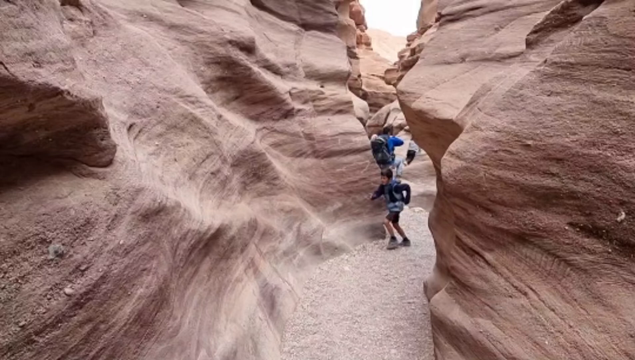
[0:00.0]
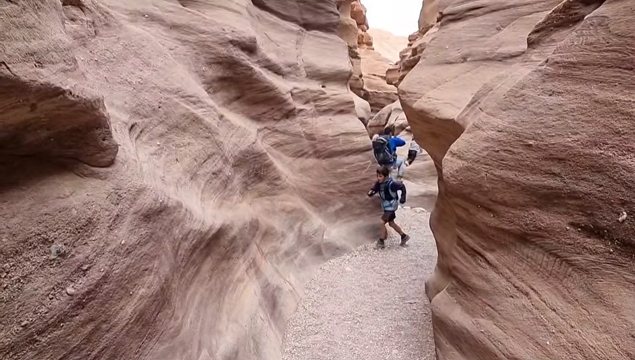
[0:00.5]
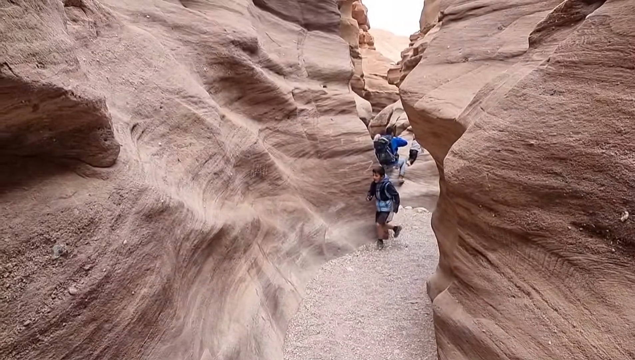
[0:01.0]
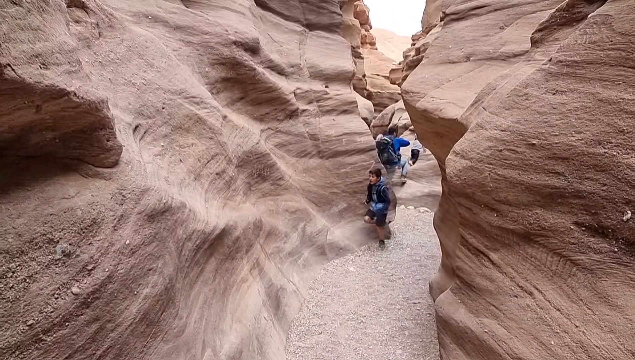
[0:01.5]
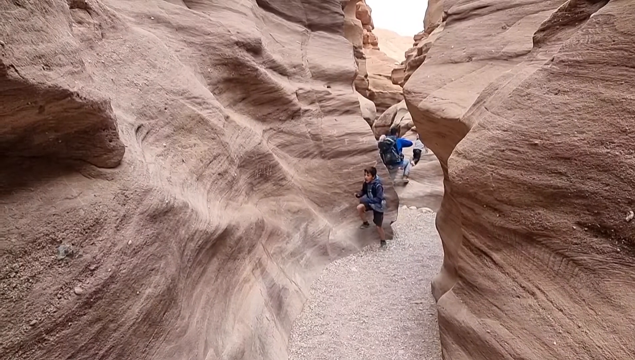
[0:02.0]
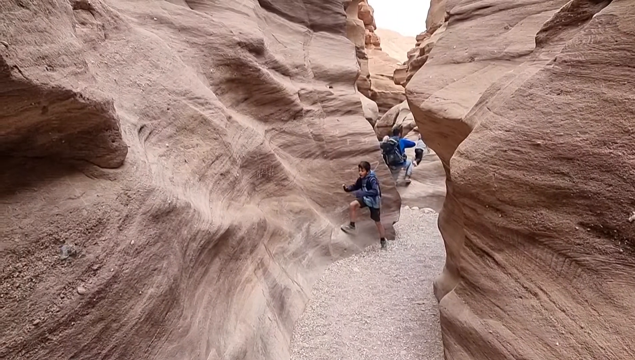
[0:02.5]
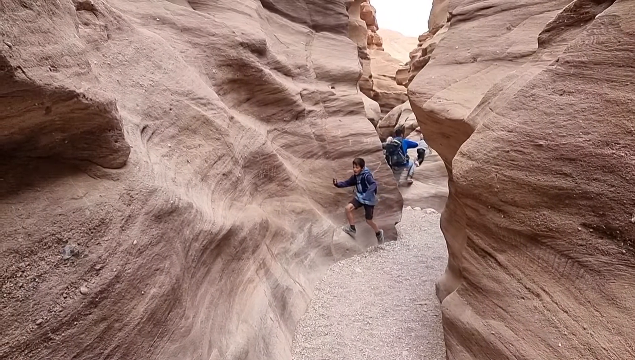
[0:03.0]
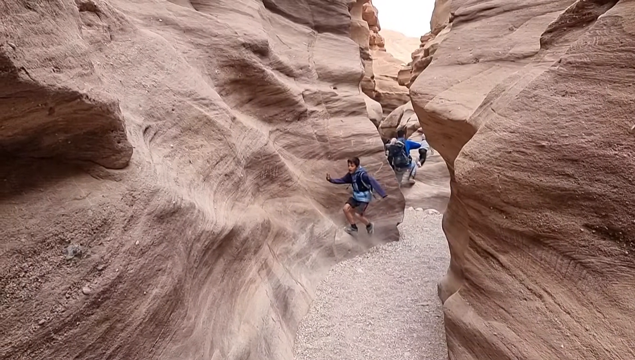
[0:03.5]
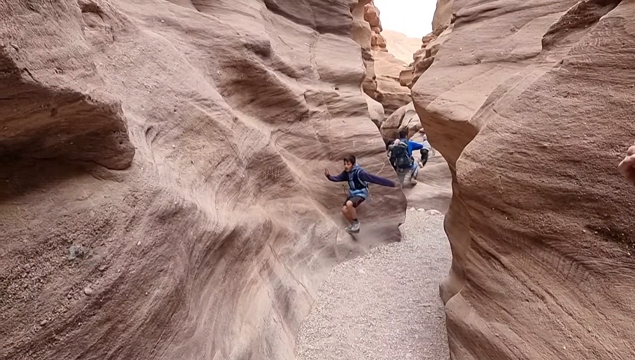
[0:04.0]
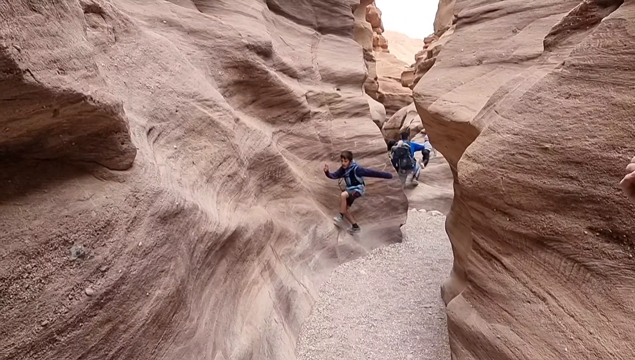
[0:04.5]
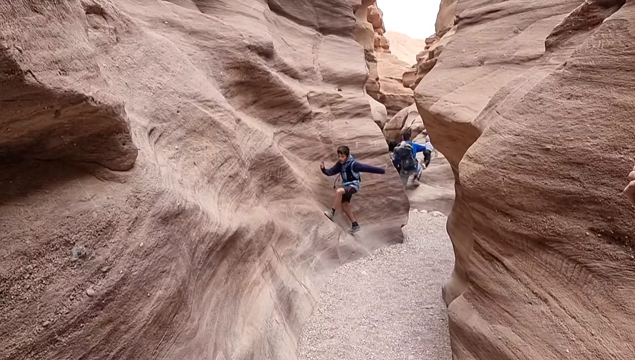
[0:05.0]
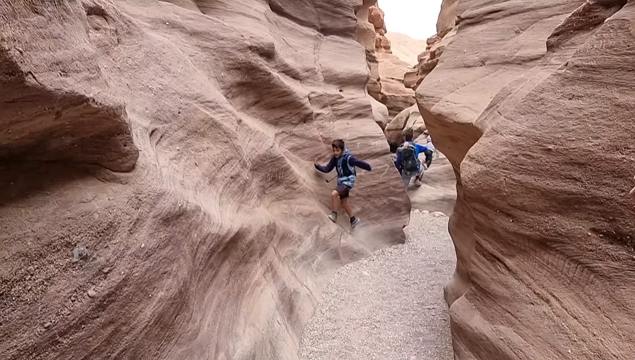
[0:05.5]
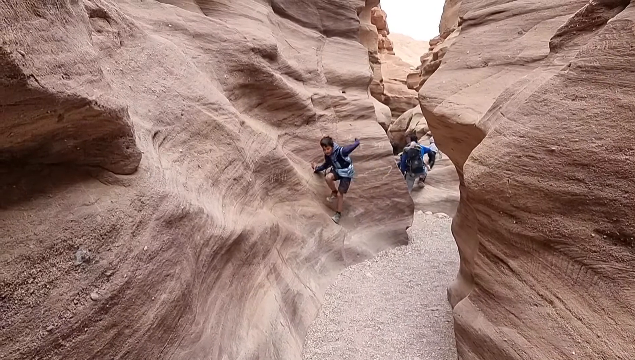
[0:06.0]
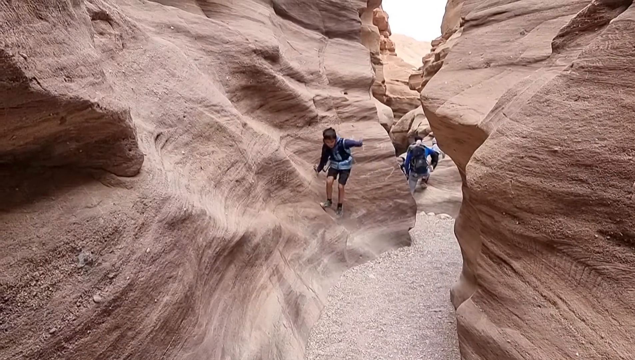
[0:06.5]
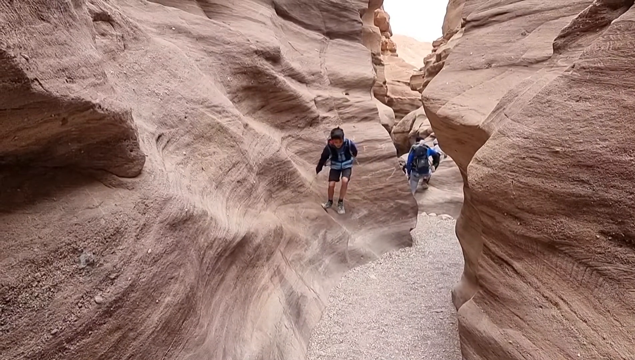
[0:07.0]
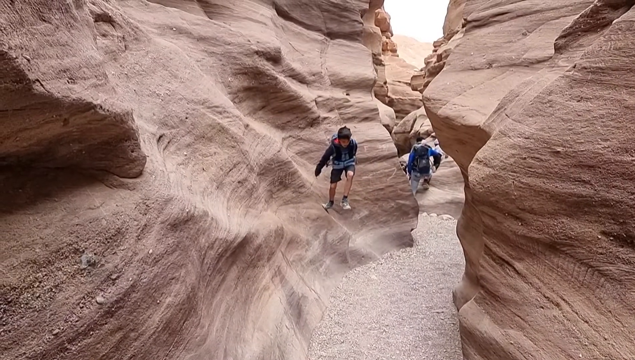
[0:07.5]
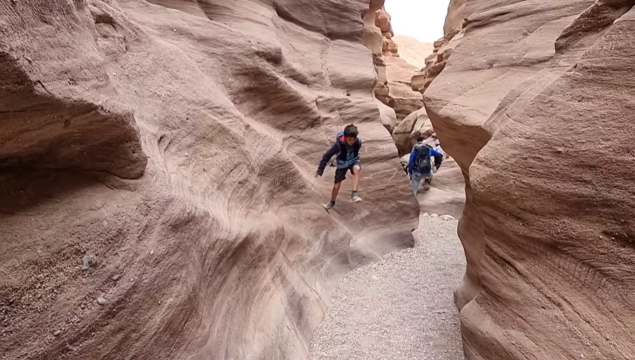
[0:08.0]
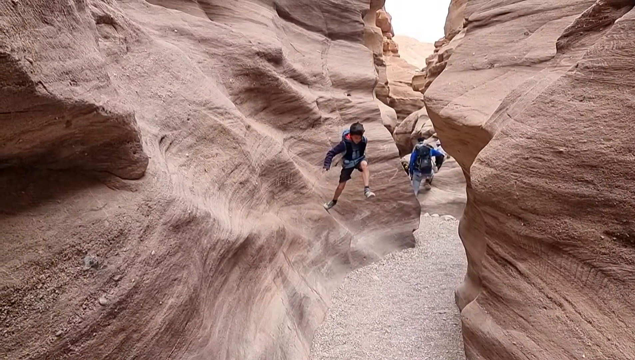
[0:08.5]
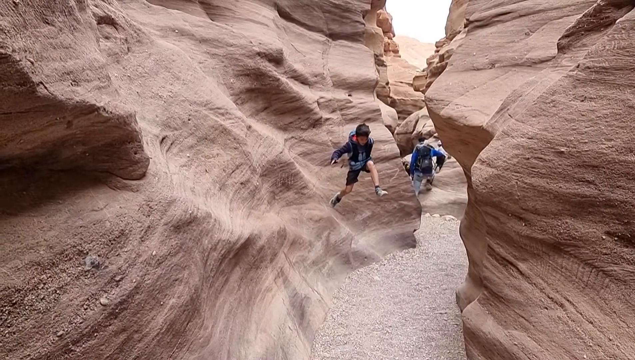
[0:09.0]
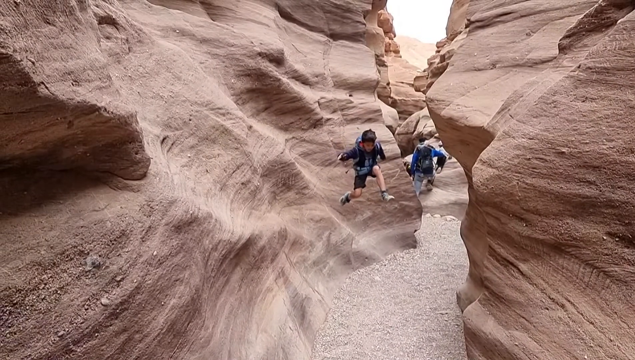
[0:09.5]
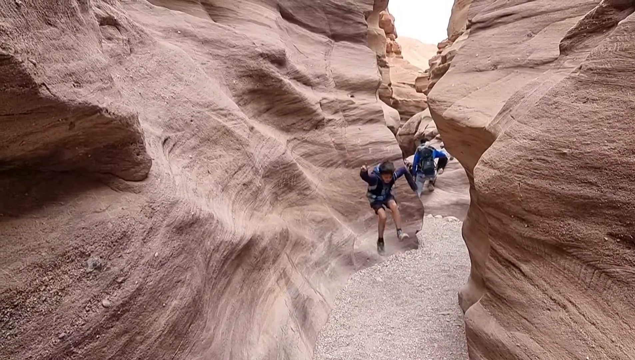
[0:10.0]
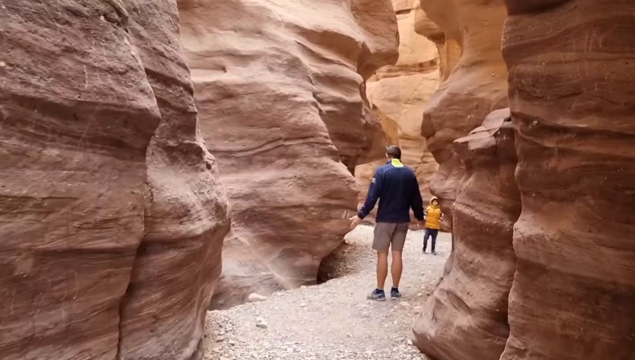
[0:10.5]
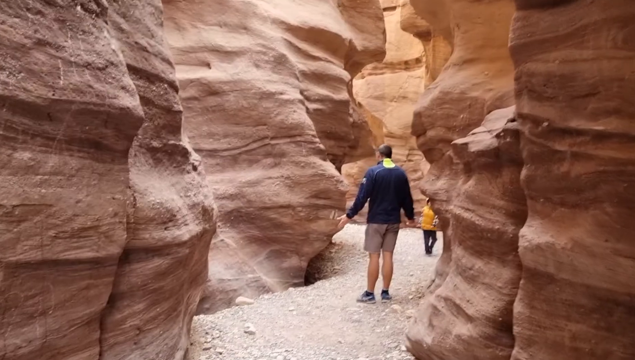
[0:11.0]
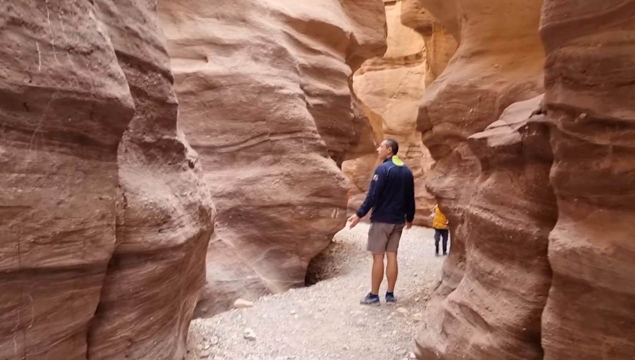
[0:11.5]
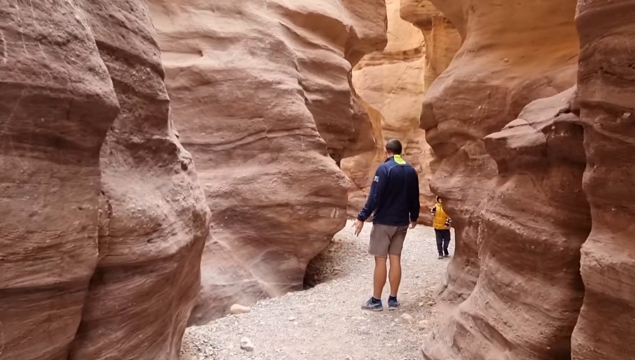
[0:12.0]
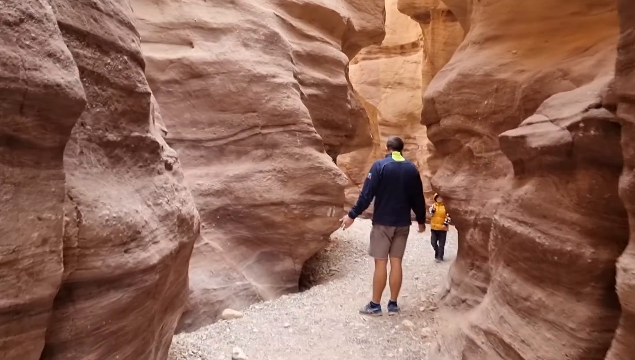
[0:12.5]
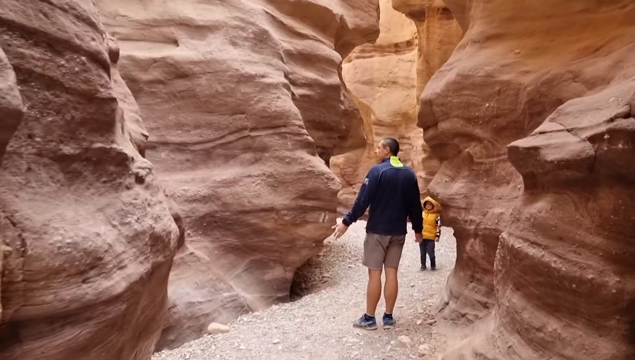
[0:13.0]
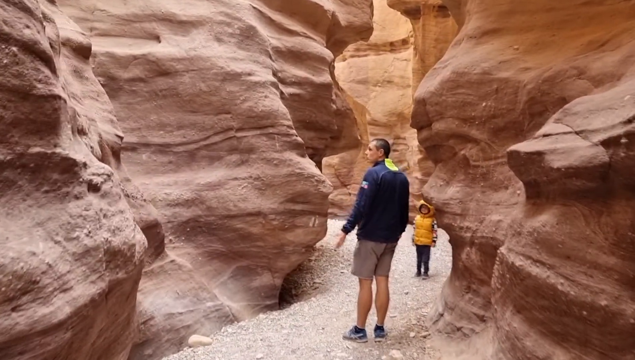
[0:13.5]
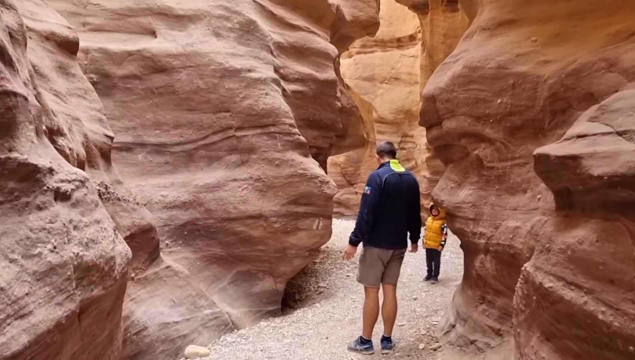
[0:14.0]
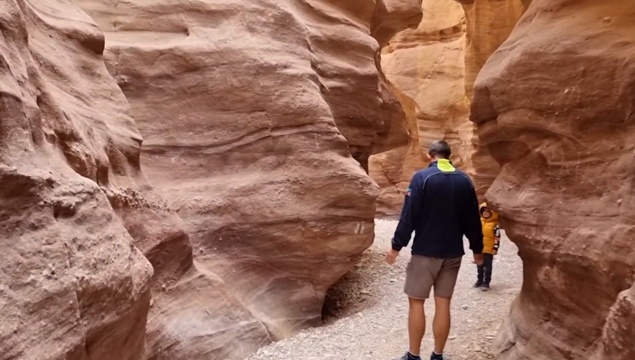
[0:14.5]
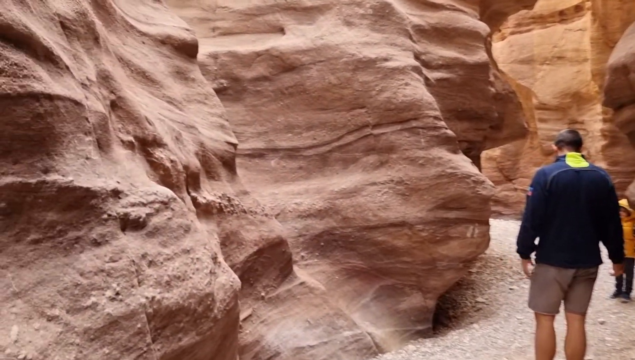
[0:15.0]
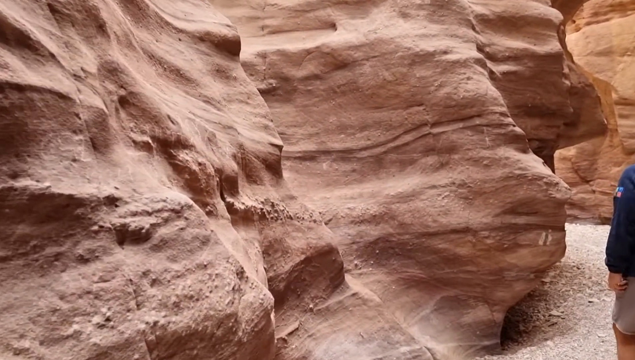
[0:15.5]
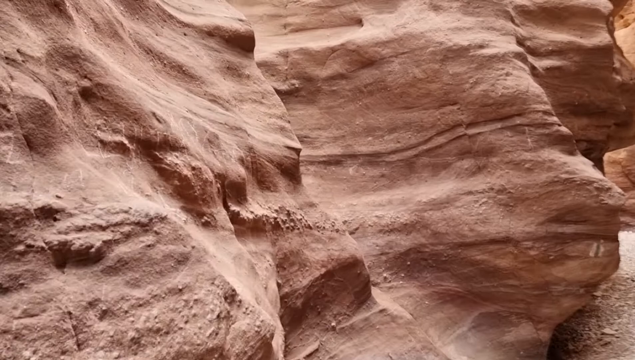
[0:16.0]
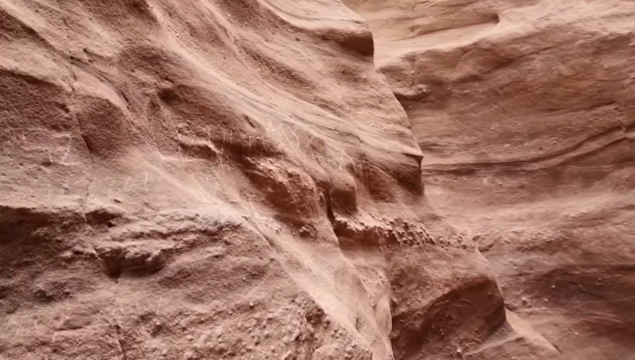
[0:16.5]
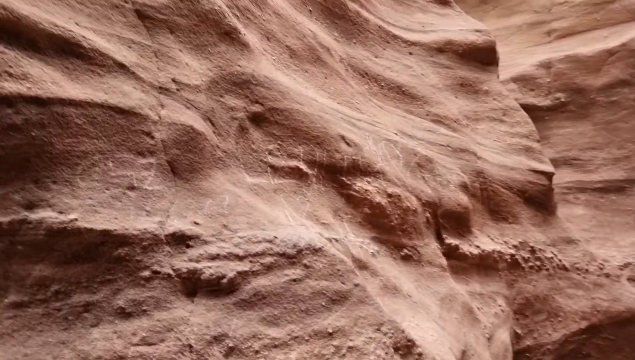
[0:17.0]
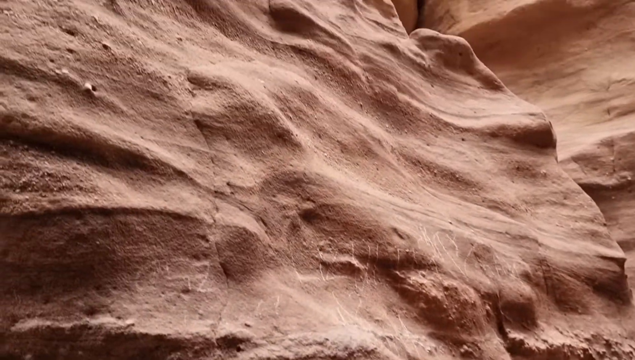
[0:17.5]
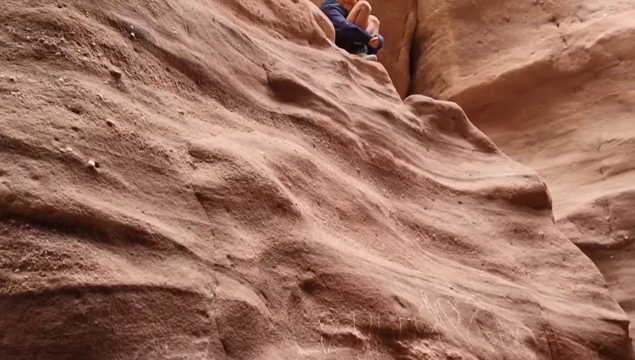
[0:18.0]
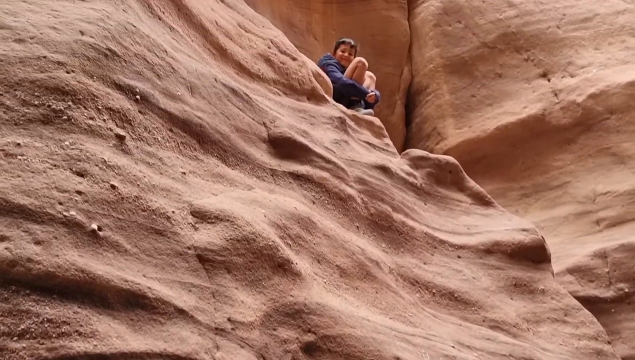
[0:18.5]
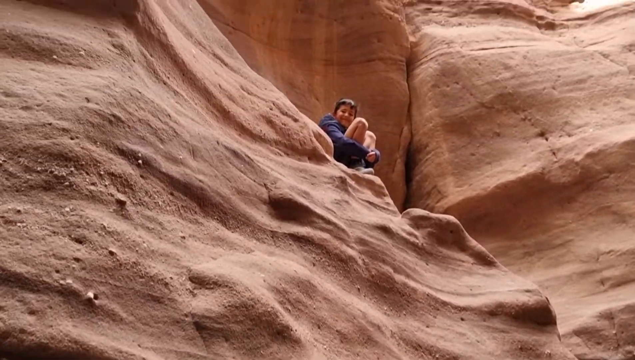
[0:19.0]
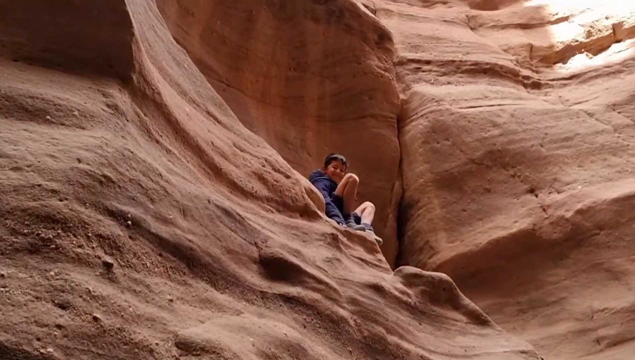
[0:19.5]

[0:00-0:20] Filmed outside in what appears to be a desert landscape, the video shows young people, apparently boys, and possibly a father exploring a rock formation. The rock is very tall, with a very narrow corridor between multiple rocks. The ground appears rocky, covered in tiny, smooth rocks of an almost white, chalky color, while the rock structures themselves are very wavy. Someone is filming while the kids run around. The children are probably about eight years old, older elementary school age, and wear jackets, shorts and sneakers. A couple of moments are in slow motion, such as when one of the kids jumps off a rock.